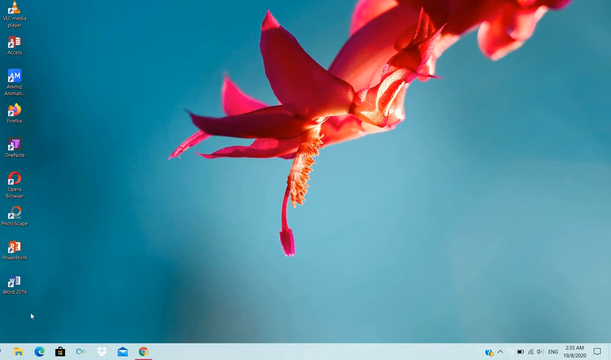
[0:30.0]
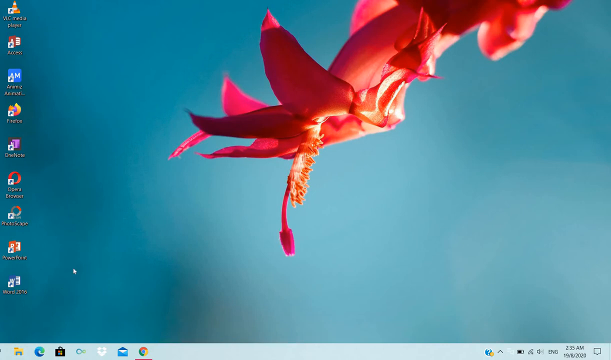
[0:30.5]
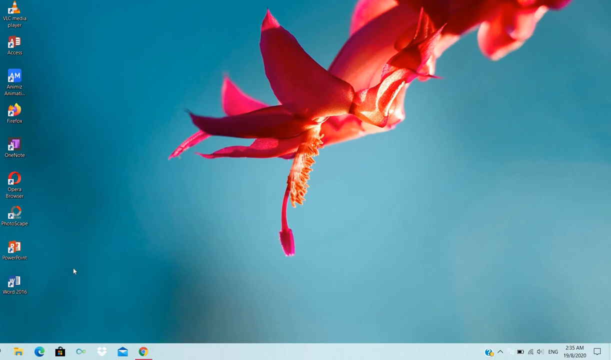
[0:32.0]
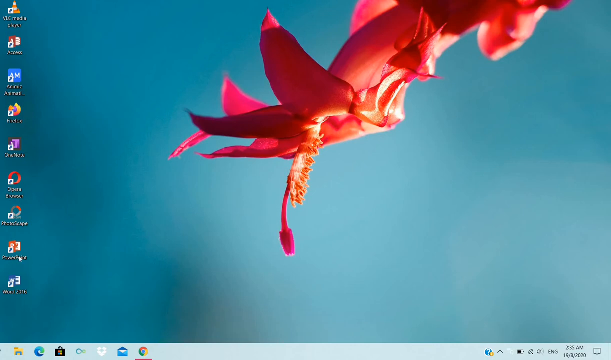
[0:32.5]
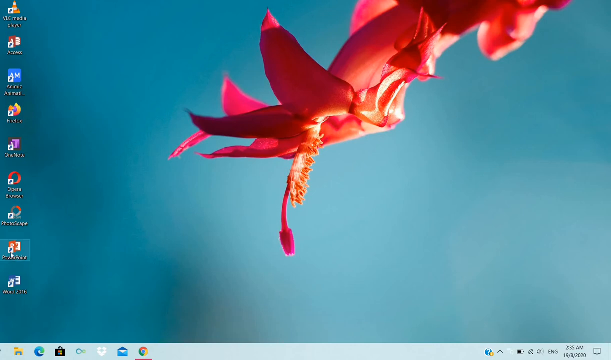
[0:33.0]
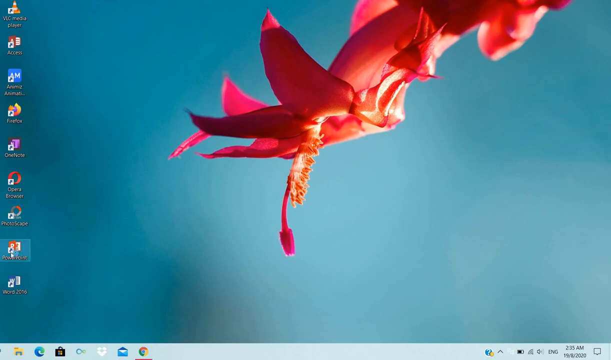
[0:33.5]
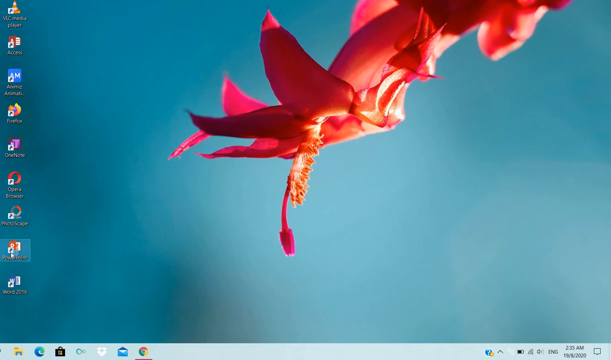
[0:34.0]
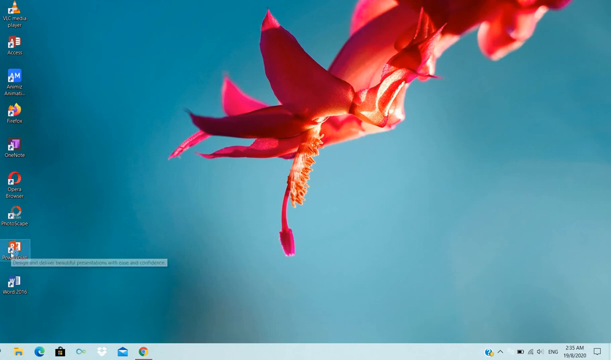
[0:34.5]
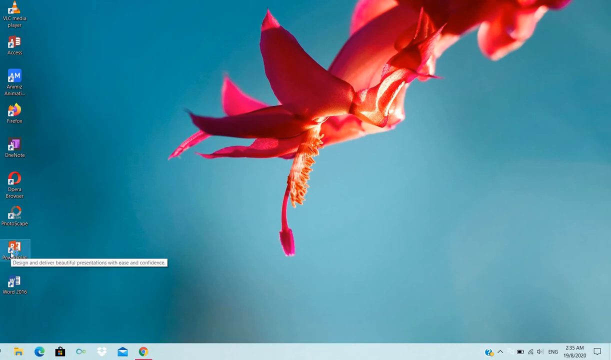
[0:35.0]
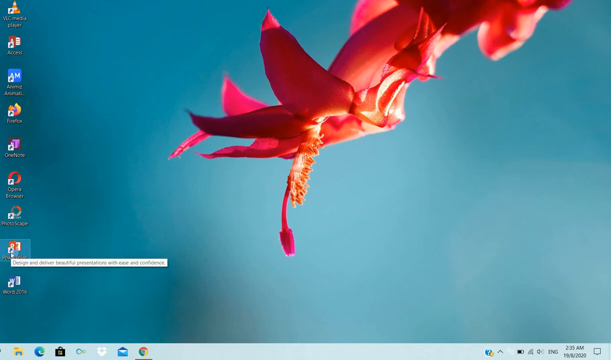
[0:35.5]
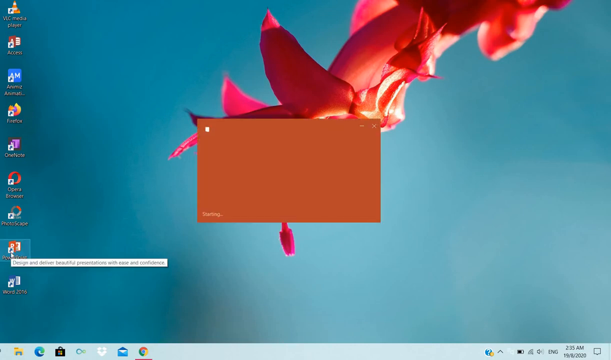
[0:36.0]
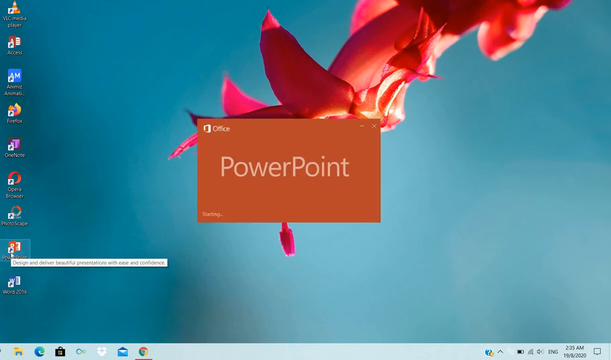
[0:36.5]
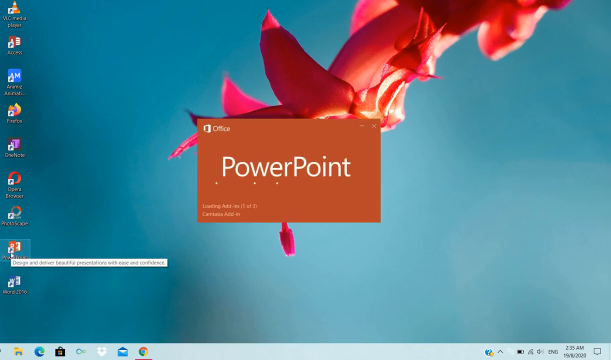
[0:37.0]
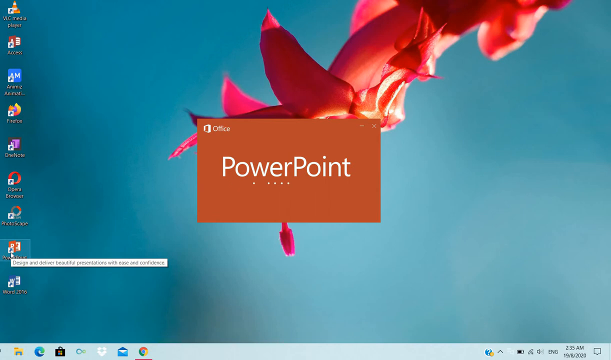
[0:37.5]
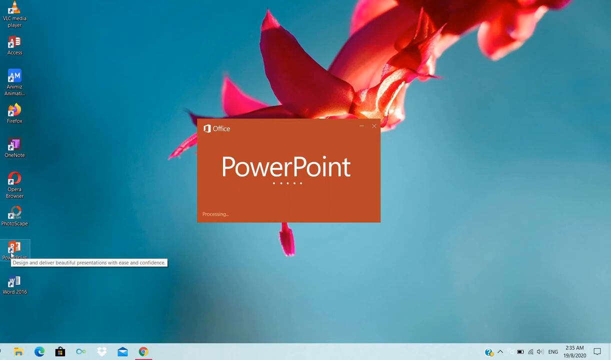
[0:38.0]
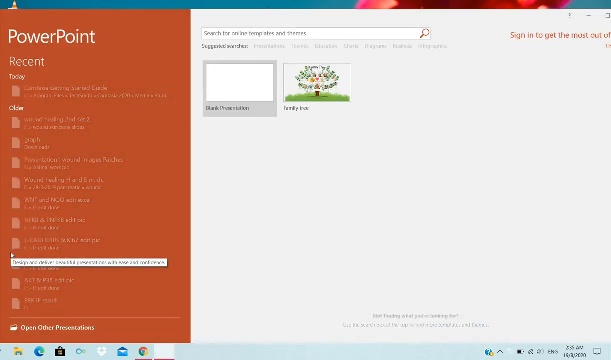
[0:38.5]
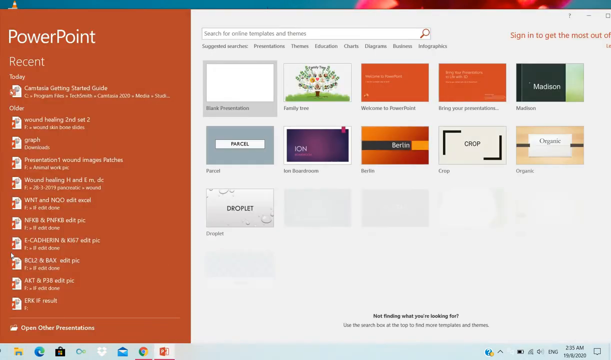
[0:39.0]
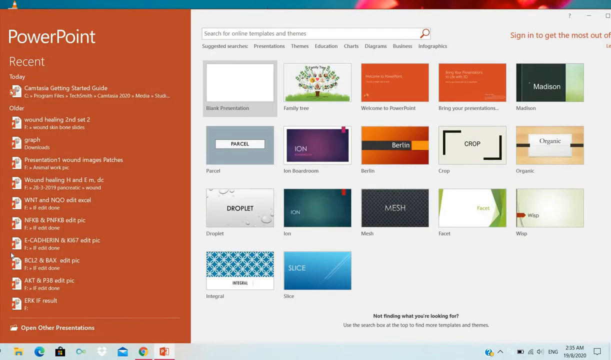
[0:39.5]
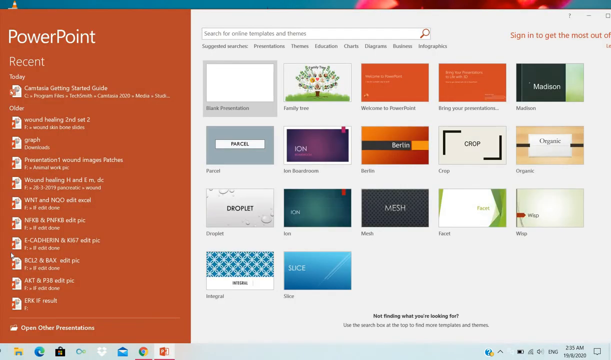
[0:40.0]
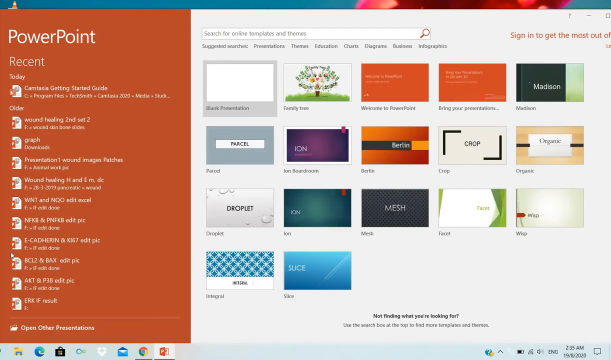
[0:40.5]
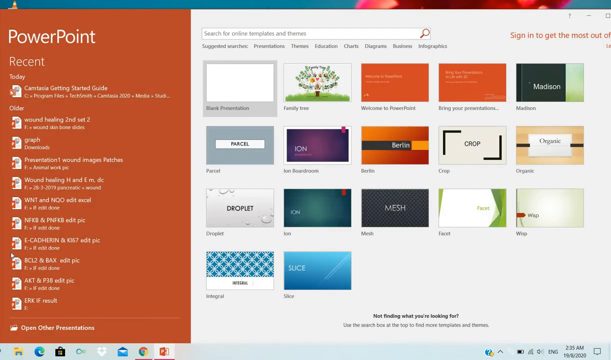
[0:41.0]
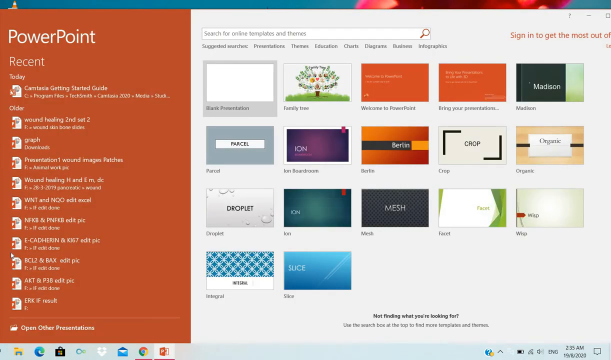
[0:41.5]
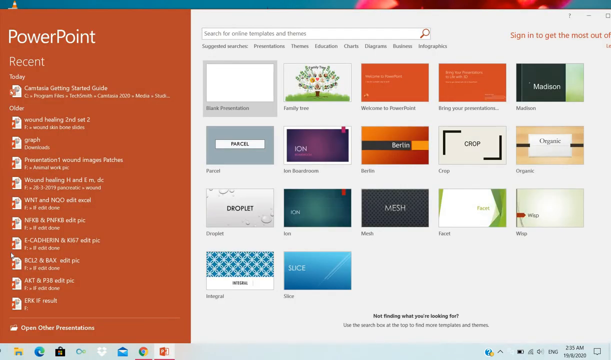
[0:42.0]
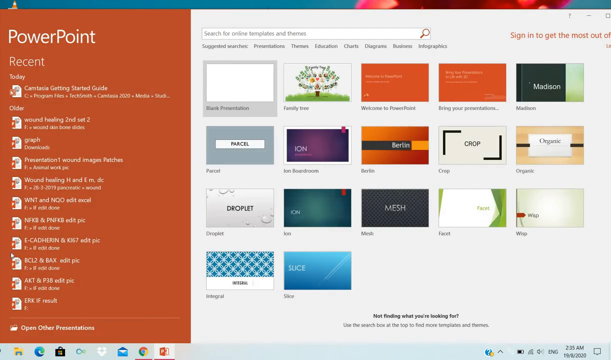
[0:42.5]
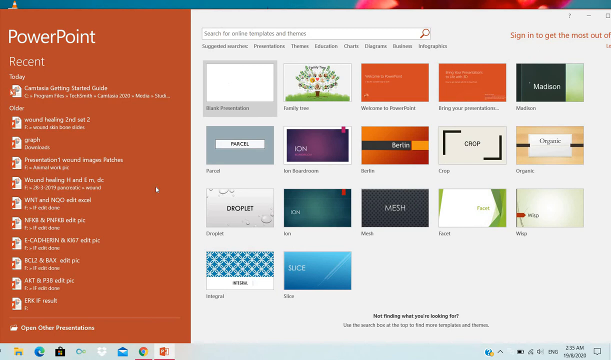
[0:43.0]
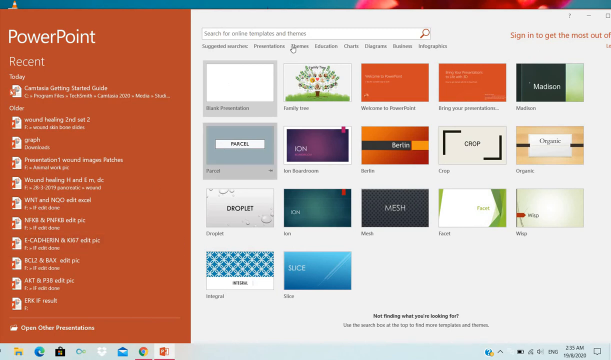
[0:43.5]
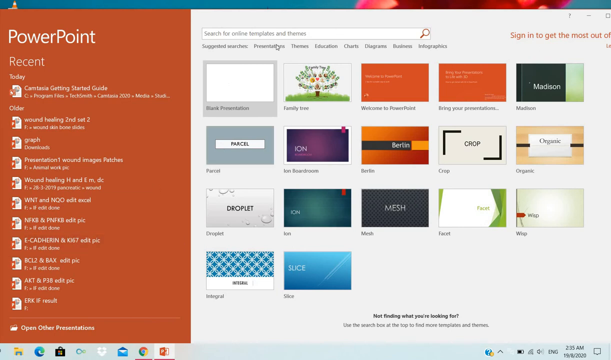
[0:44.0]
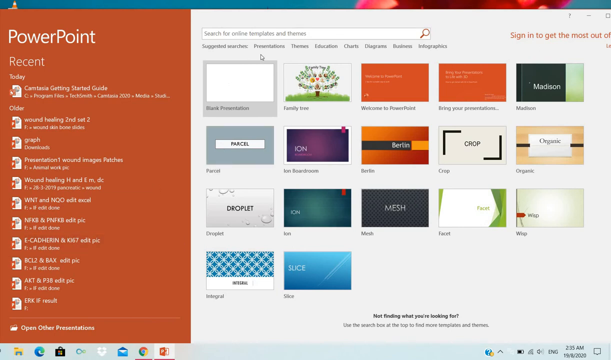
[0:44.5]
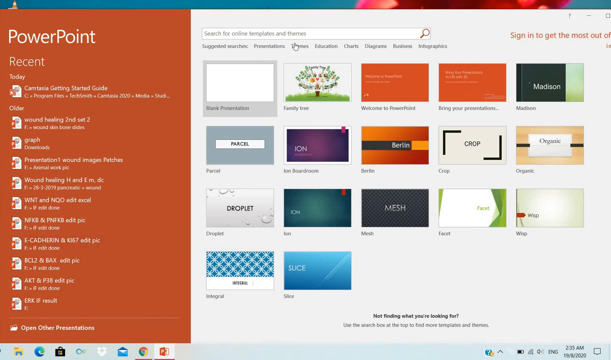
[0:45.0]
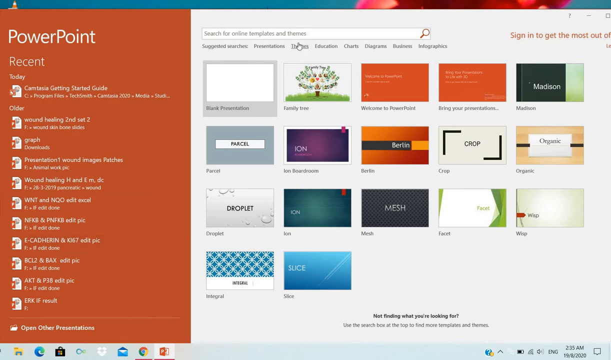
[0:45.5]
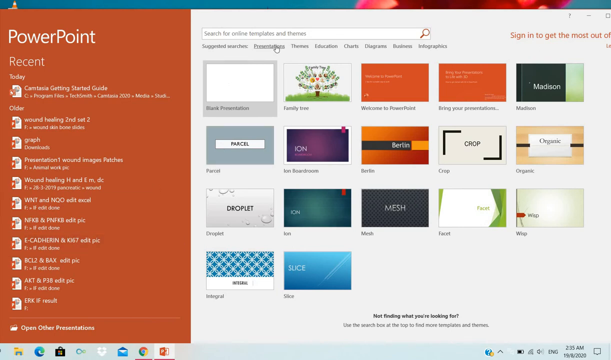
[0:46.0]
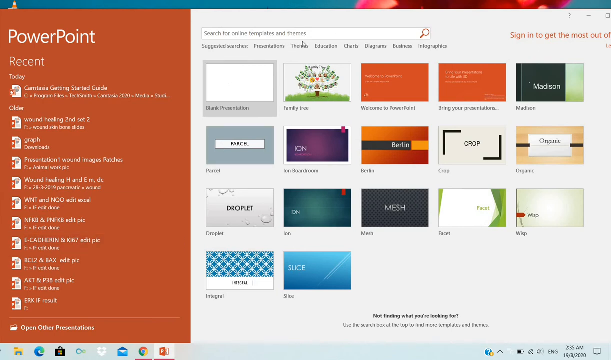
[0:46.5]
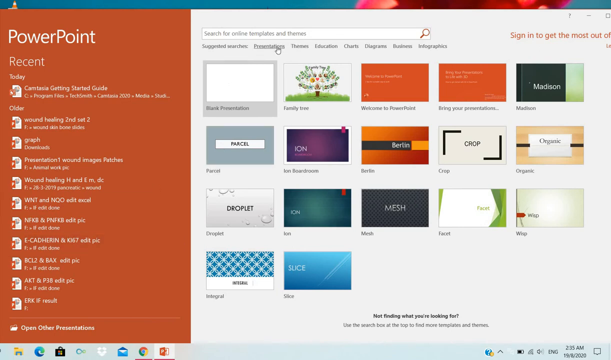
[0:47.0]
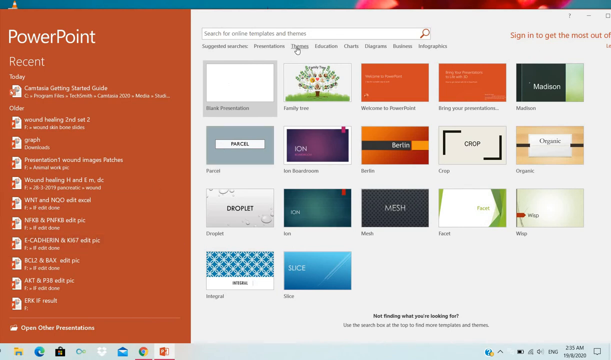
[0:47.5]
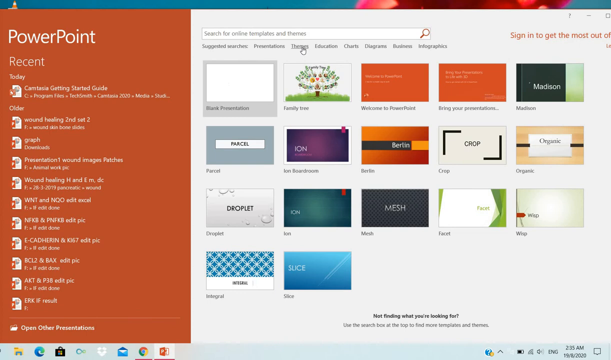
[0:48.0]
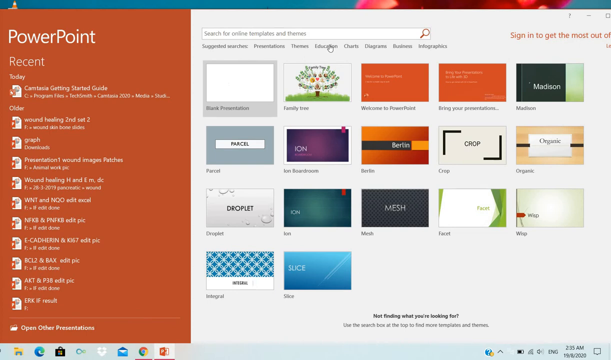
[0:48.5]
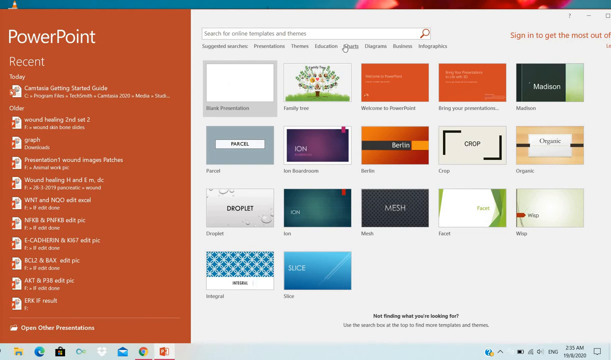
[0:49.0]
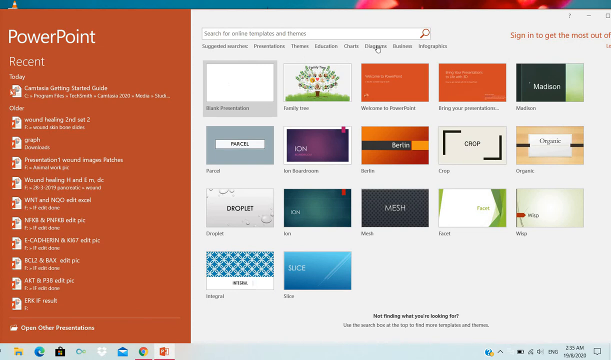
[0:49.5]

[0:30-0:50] A small white arrow mouse pointer moves slowly towards the bottom left of the screen. Second from the bottom among the icons on the screen is a PowerPoint icon; the pointer clicks it and PowerPoint opens. On the left is a burnt orange rectangle running from the top to the bottom of the screen, making up the left third of the screen. It reads "PowerPoint" in white and then "recent", with a long list of recently worked-on PowerPoints. To the right is a light gray background with templates and options for creating something new, with a search bar above the templates. At the far right, in burnt orange on the light gray, it says "sign in to get the most out of", and the rest cannot be read. Seventeen templates are visible on the screen.